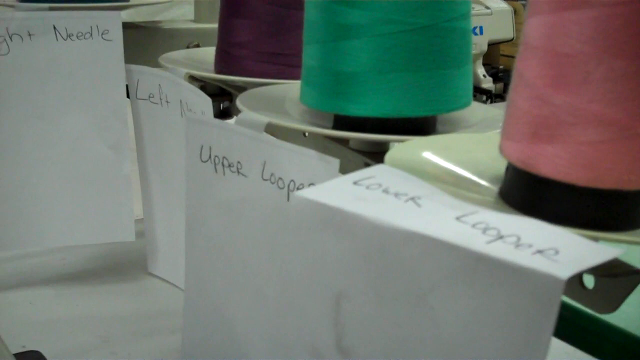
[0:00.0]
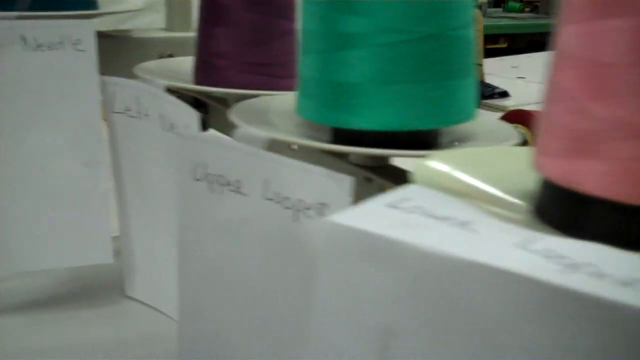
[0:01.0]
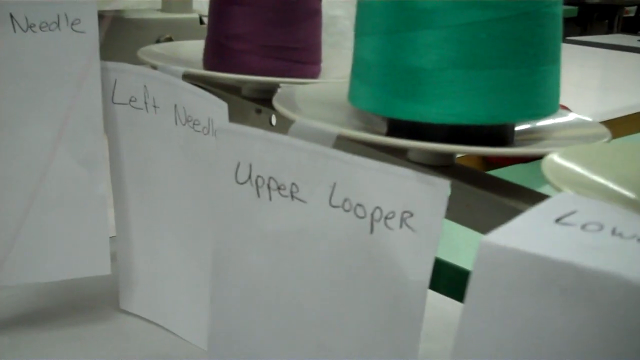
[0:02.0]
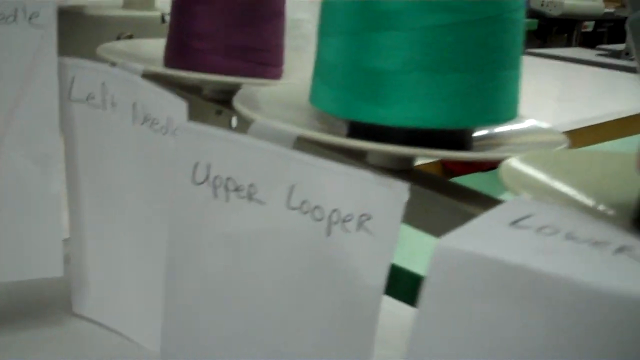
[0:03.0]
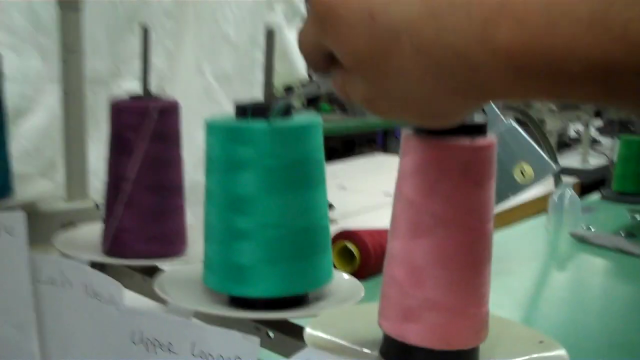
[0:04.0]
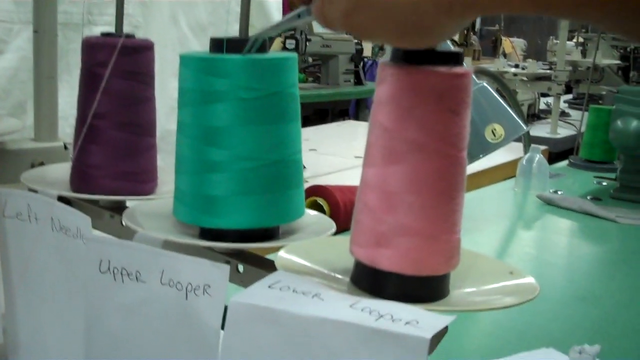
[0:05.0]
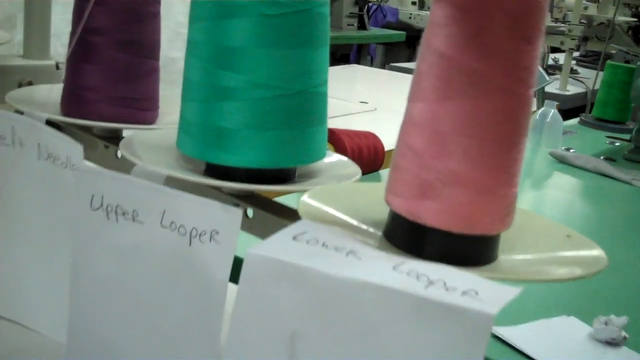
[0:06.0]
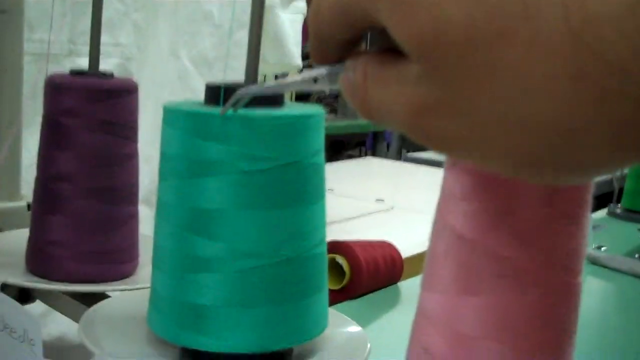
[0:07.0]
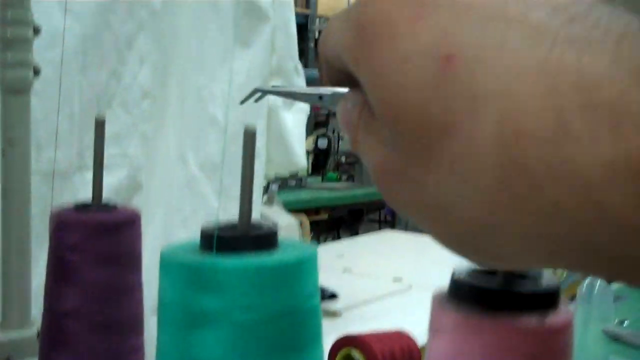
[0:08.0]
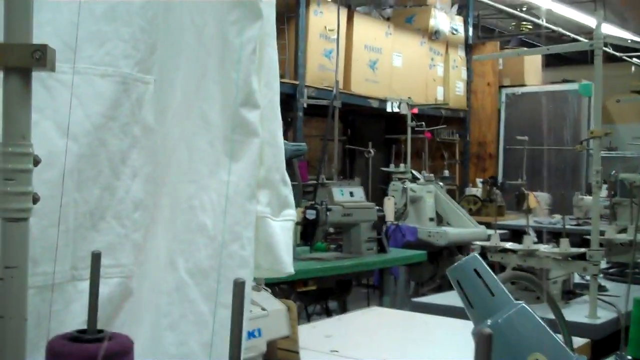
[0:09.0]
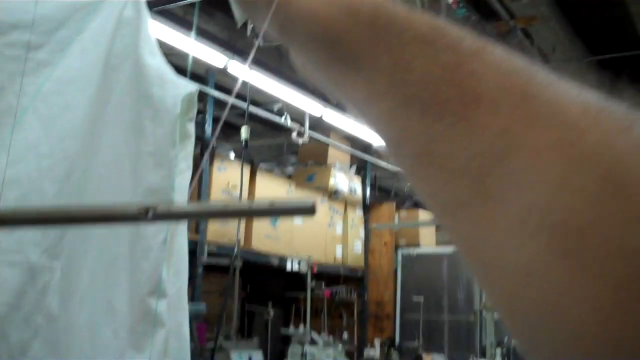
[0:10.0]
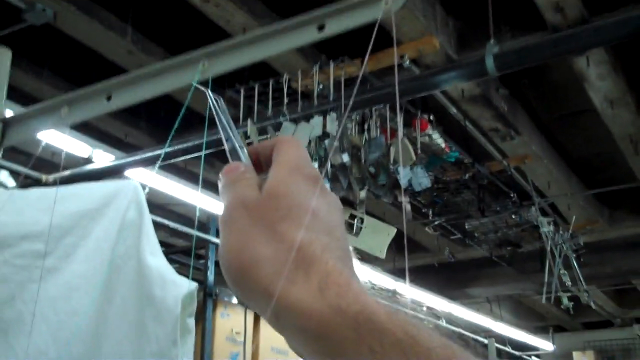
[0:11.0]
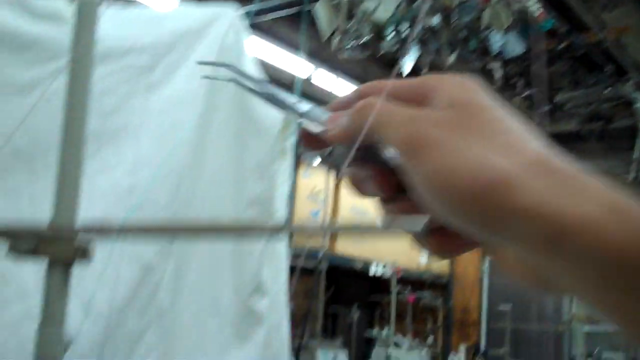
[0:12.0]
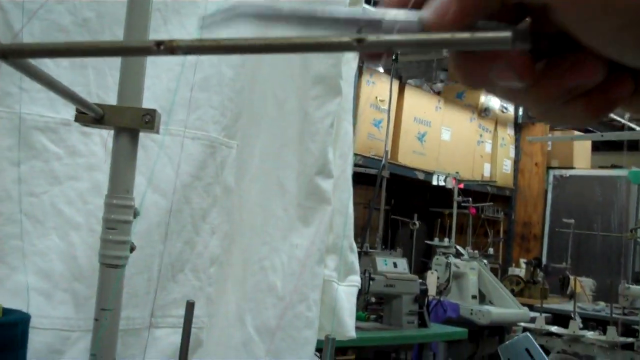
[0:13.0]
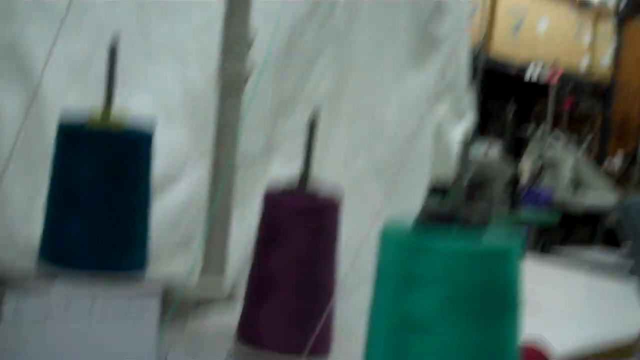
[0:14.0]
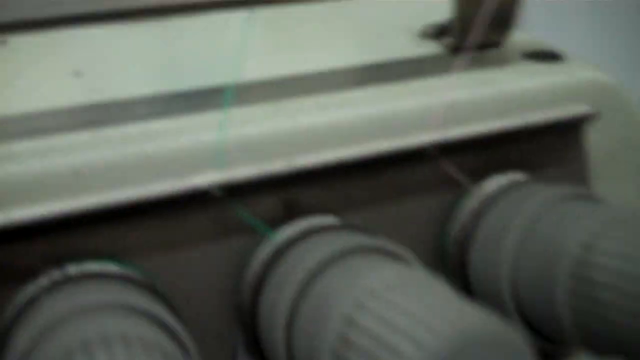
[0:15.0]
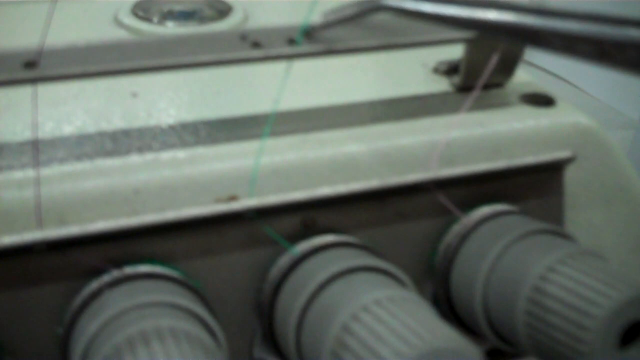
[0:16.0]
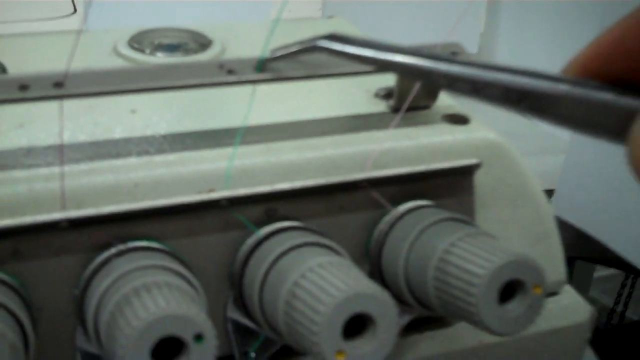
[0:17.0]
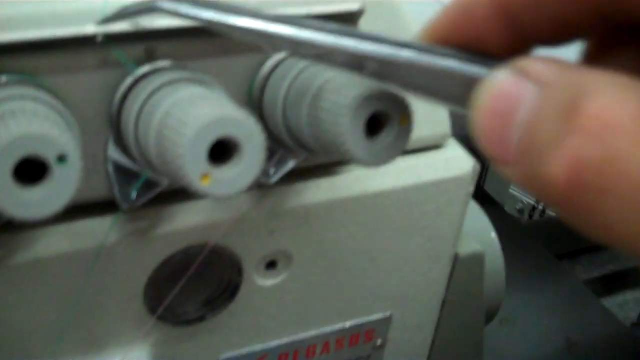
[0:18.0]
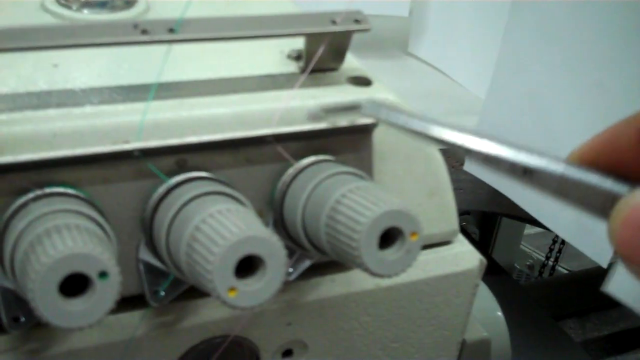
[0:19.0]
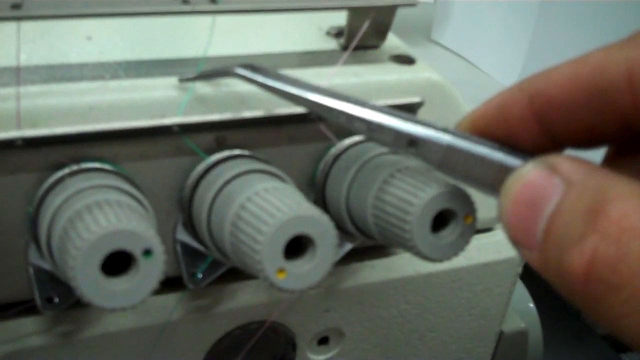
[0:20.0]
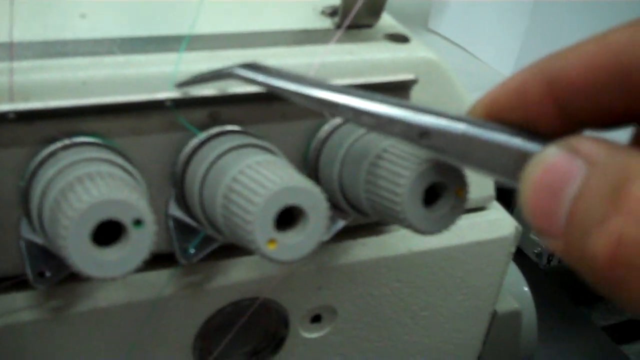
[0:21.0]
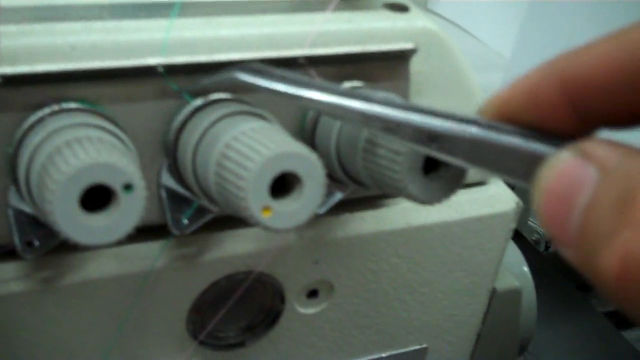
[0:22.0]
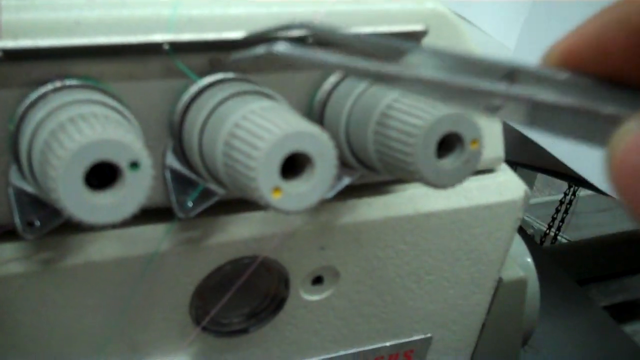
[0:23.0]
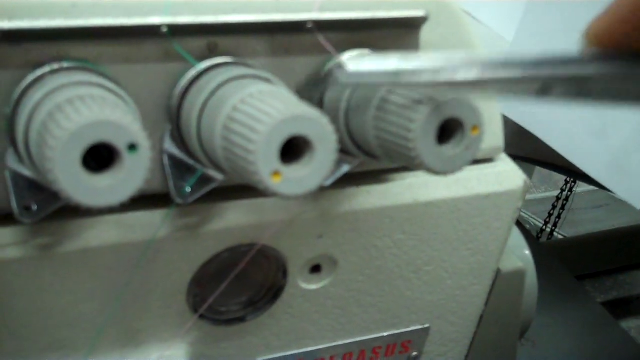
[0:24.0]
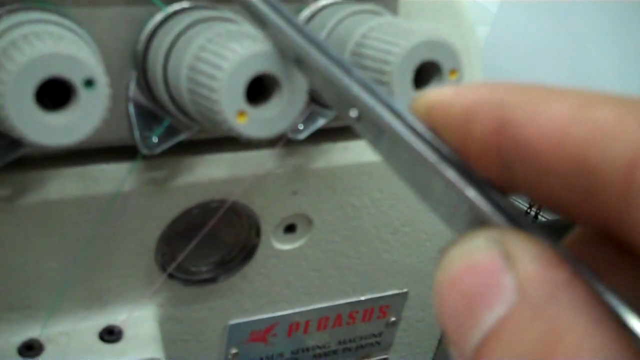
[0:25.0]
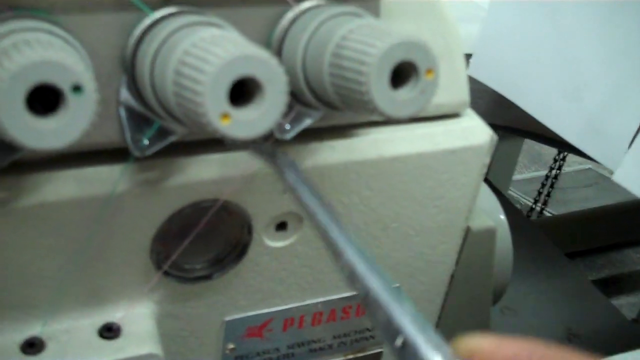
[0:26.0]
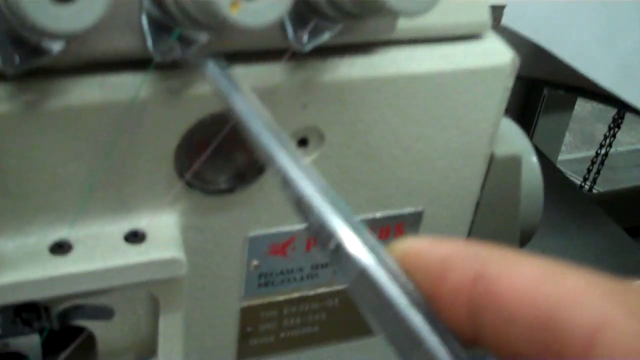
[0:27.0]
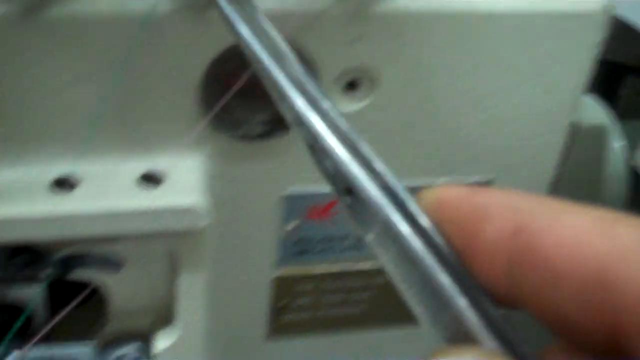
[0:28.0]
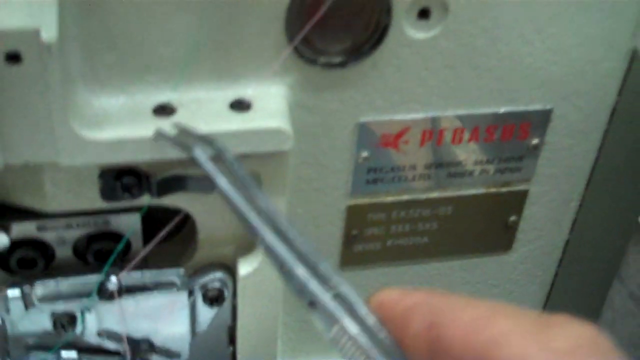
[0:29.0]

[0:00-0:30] Multiple spools of thread in different colors are shown: the first is pink, the second green, and the third purple. Each spool is extremely tall. Under each spool is a label written in black ink on a sheet of paper, attached with a piece of tape. Under the pink spool it reads "lower looper", under the green spool "upper looper", and under the purple spool "left needle". The pink and purple spools have less thread on them than the green spool. A hand reaches in with tweezers and goes up a line of string connected to a metal bar; the tweezers then show that it is also connected to a type of turning or twisting knob.